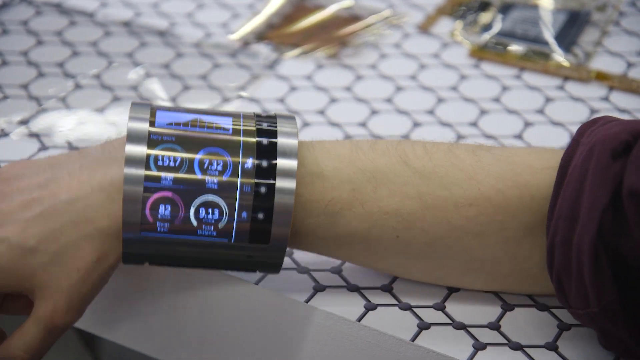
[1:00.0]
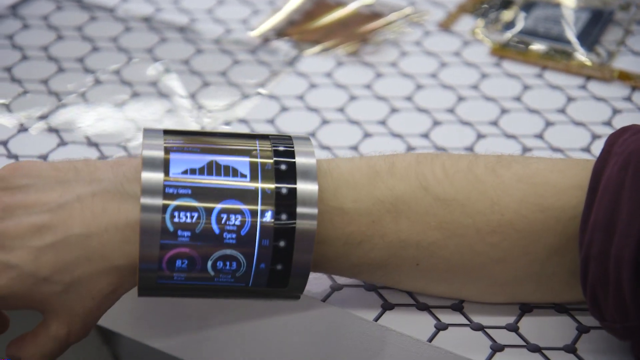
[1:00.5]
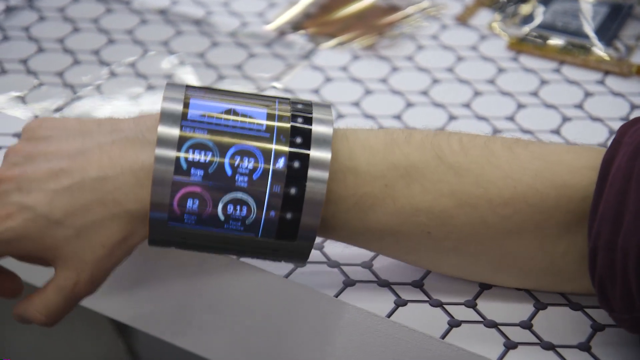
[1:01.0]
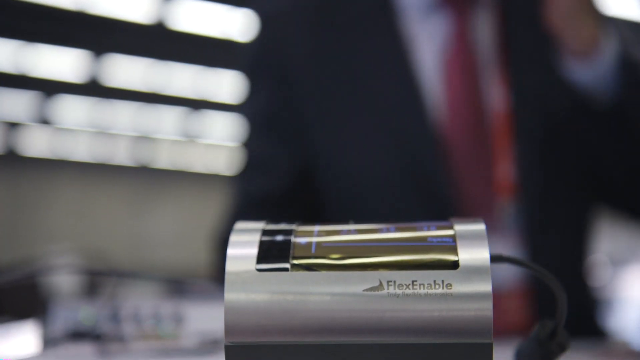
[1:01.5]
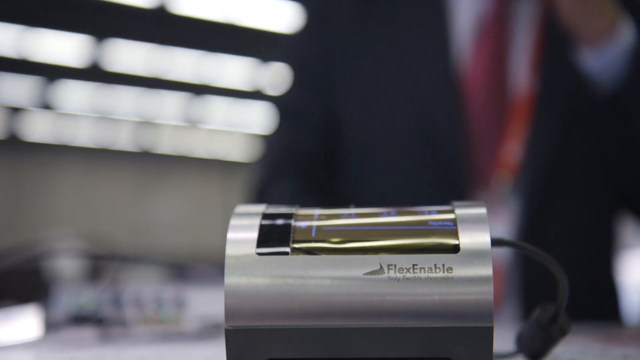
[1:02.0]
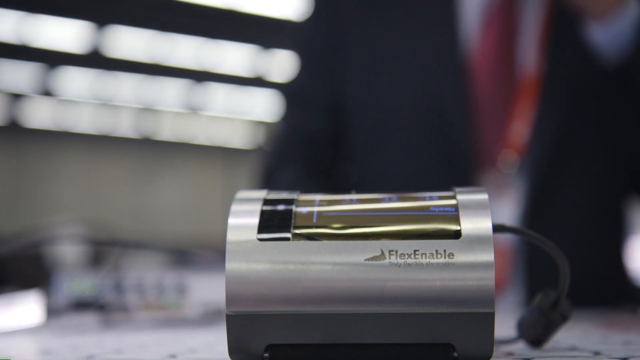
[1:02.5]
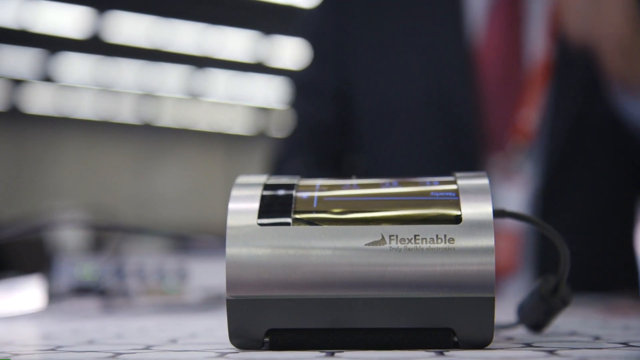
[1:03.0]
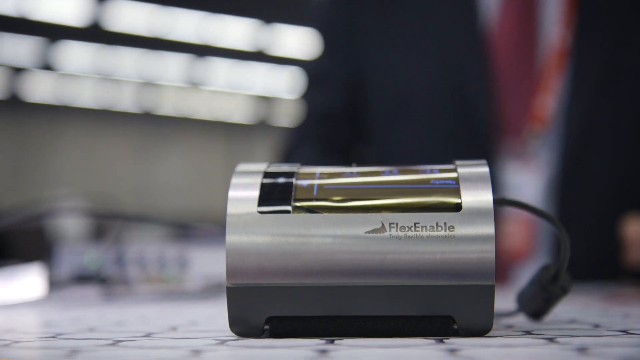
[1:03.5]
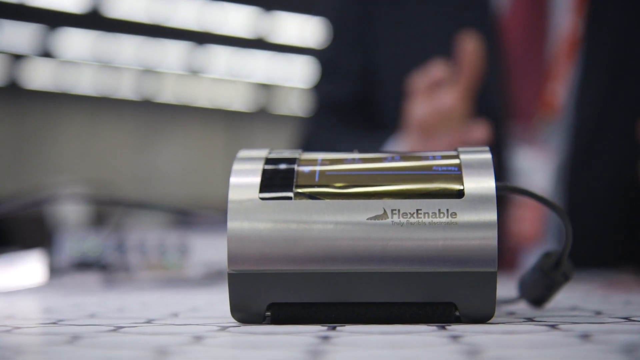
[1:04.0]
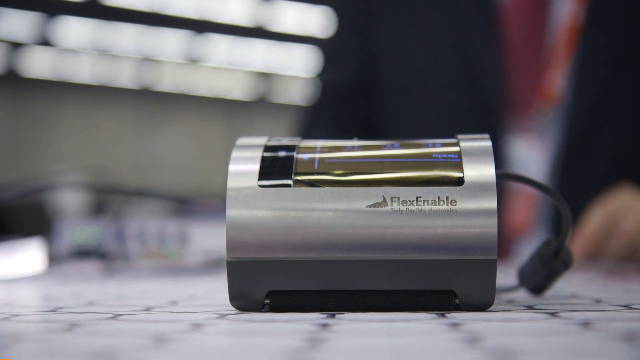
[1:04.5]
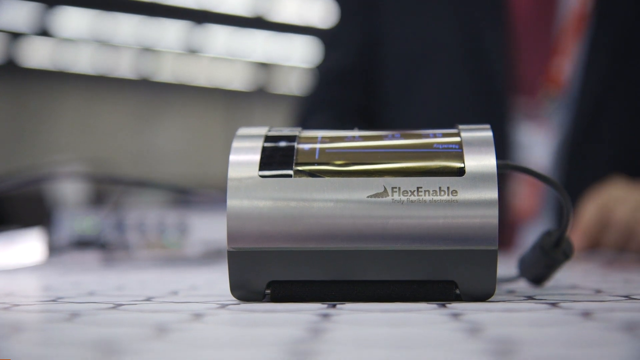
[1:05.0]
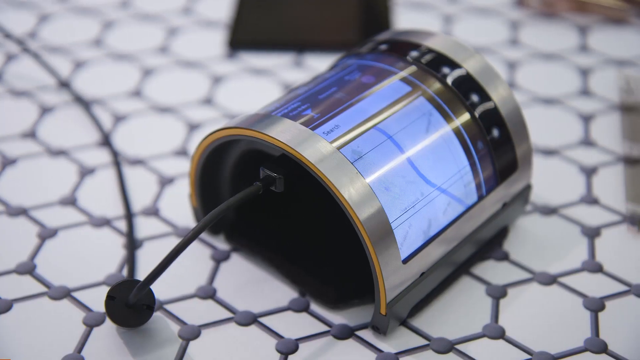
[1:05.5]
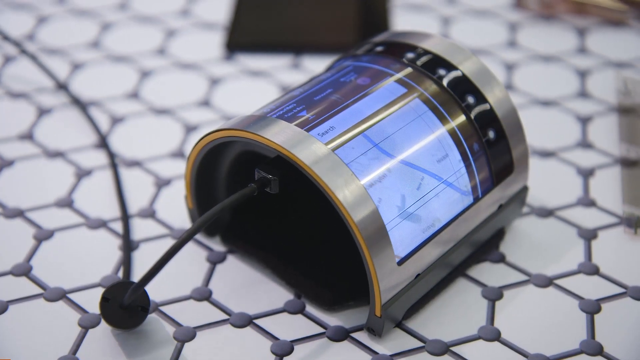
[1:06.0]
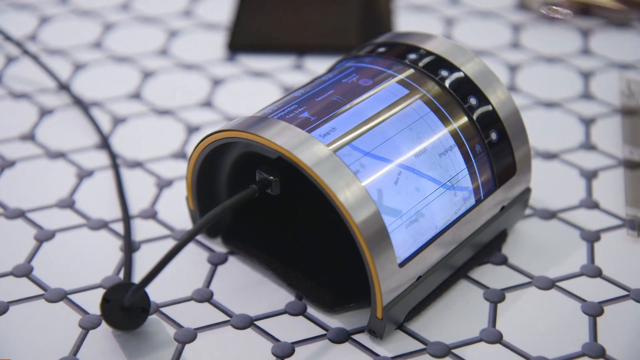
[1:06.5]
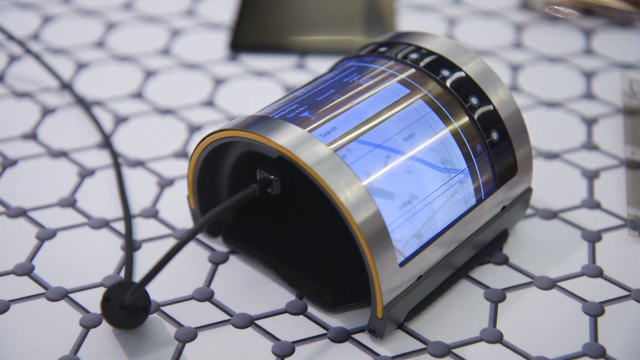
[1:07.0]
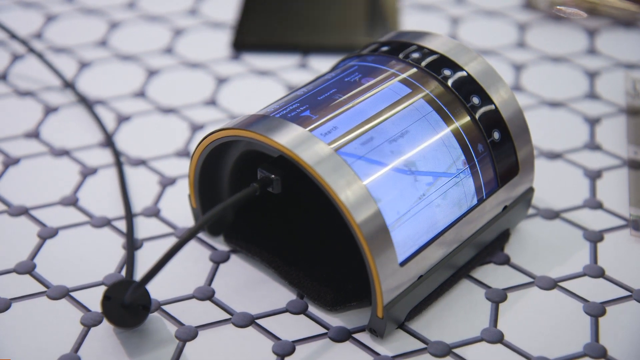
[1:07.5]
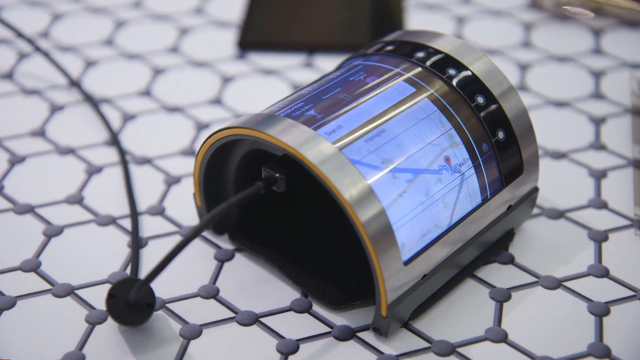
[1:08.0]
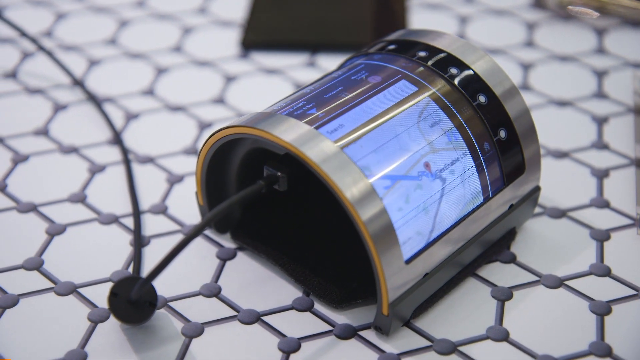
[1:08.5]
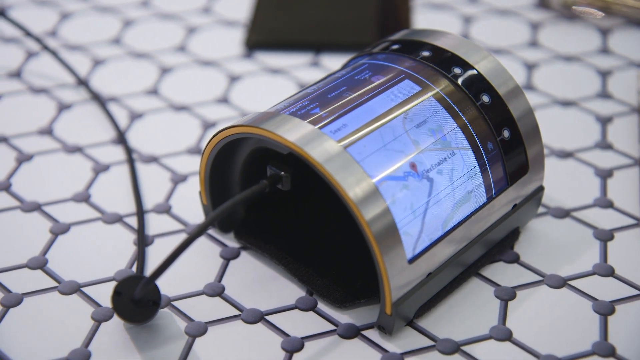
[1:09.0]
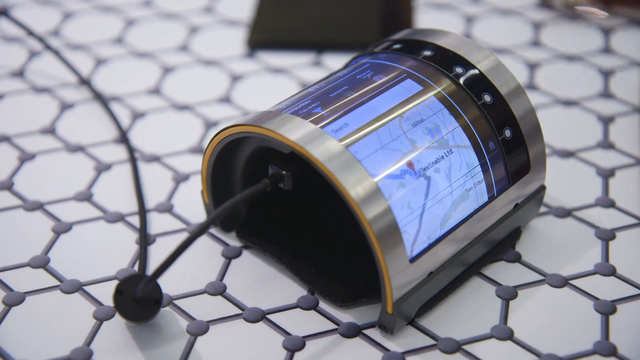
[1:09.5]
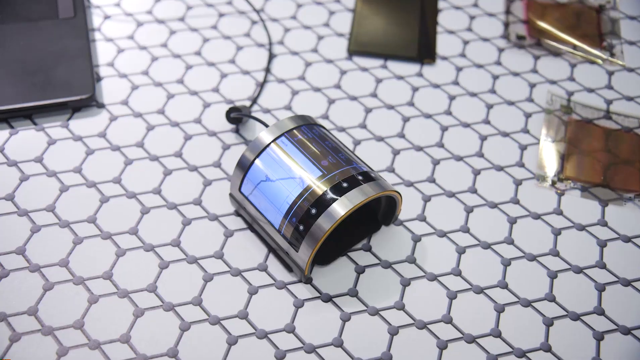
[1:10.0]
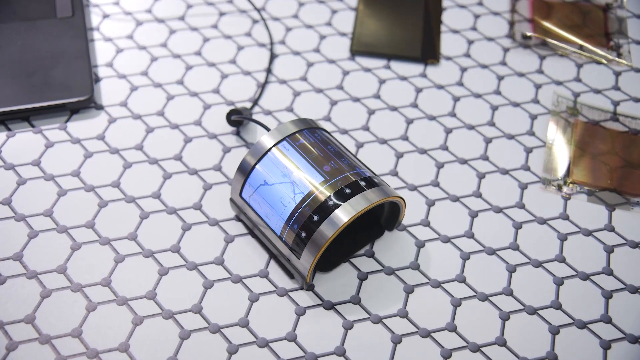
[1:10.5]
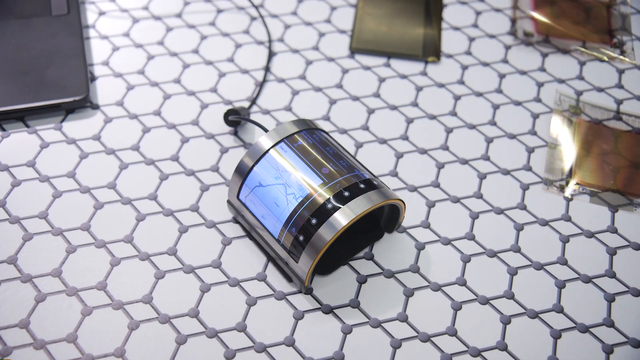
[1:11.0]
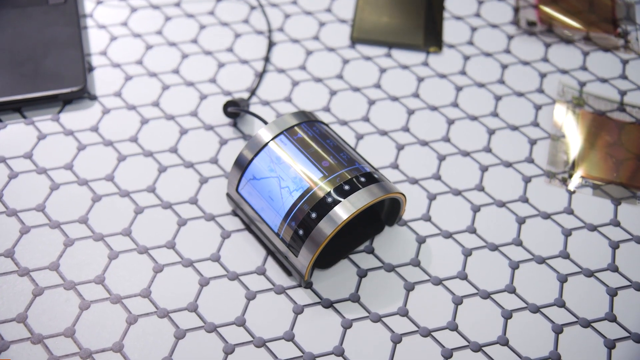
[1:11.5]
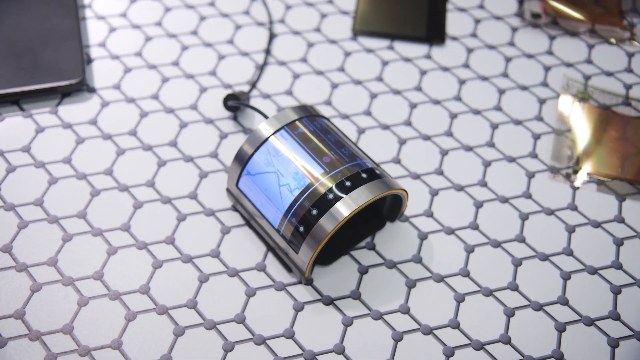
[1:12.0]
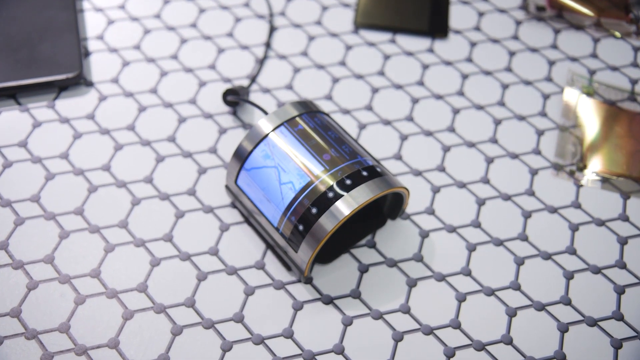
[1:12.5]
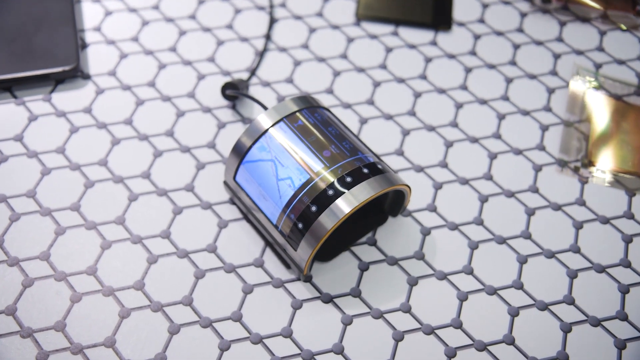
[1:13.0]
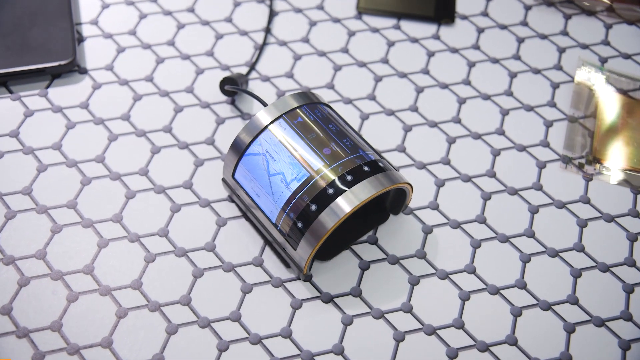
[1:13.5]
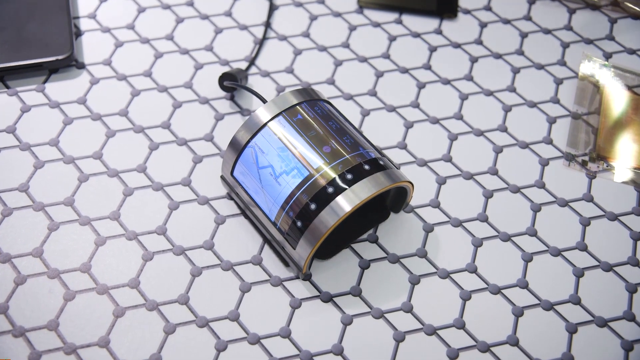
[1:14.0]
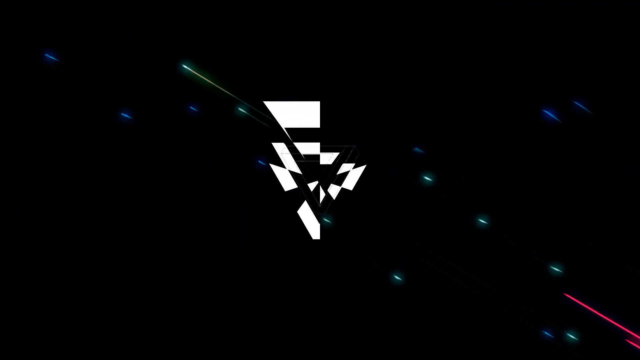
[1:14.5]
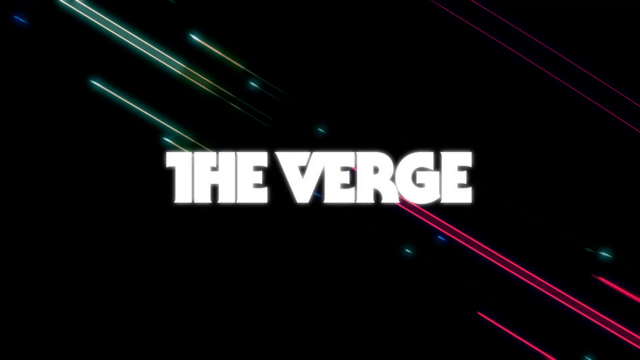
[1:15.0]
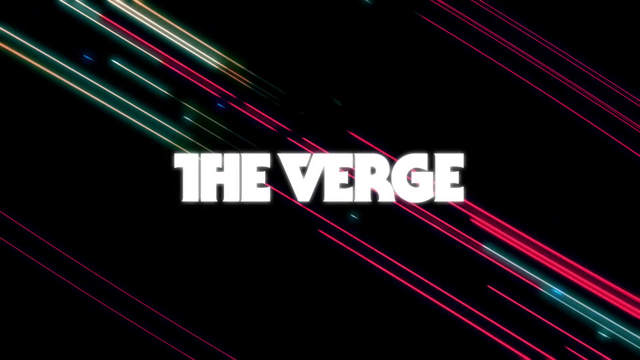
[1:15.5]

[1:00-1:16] A man wears a very wide wristband that displays many different electronics, technical graphs and other things it is capable of doing. He rests his arm on a white table covered in black hexagon shapes all connected to one another. The band is then shown off his arm, resting on the table and hooked up to a wire coming from somewhere. The different graphs and capabilities of the wristband are shown. At the end of the video, "The Verge" appears in white on a black screen.